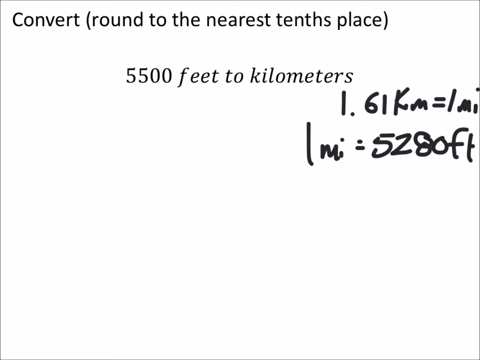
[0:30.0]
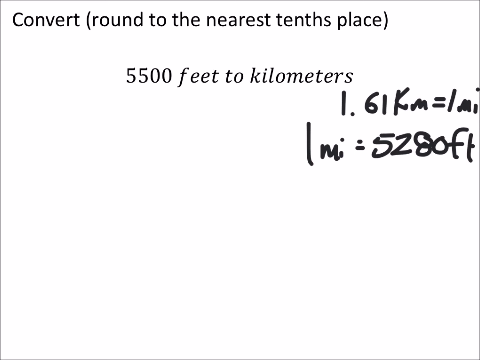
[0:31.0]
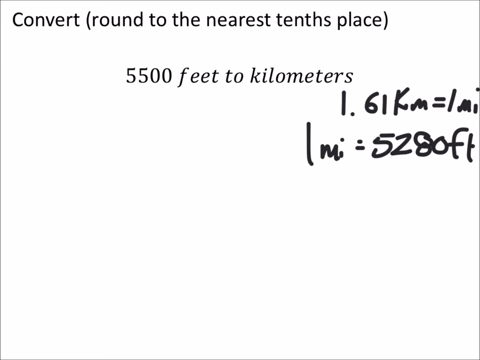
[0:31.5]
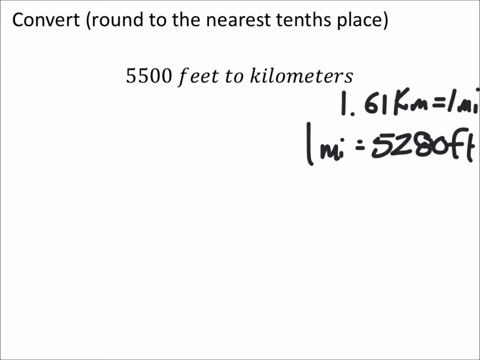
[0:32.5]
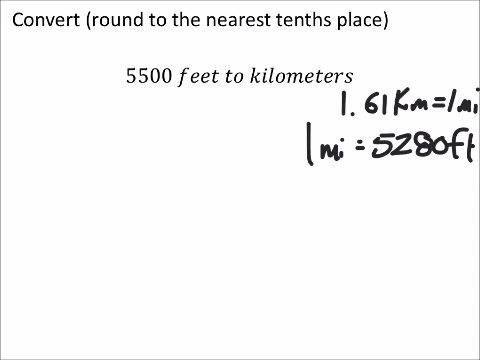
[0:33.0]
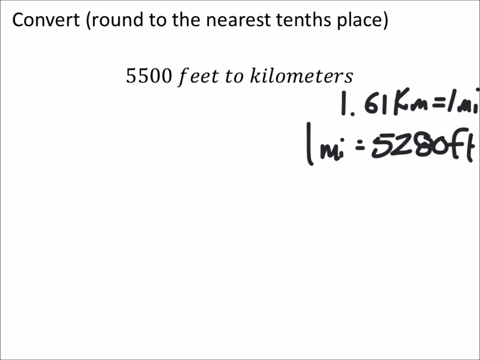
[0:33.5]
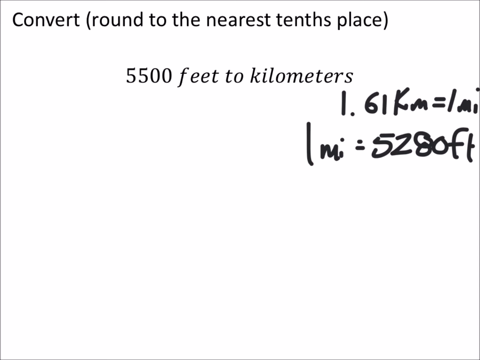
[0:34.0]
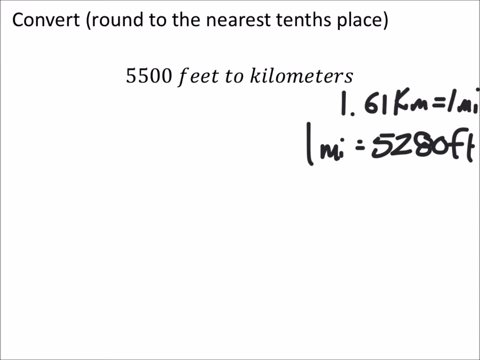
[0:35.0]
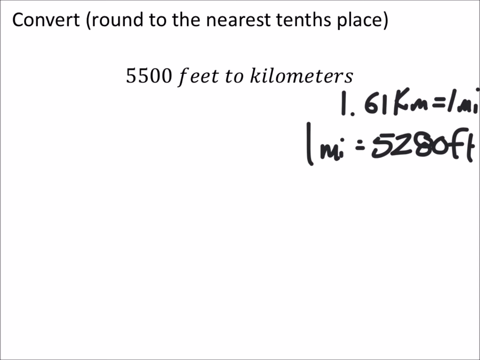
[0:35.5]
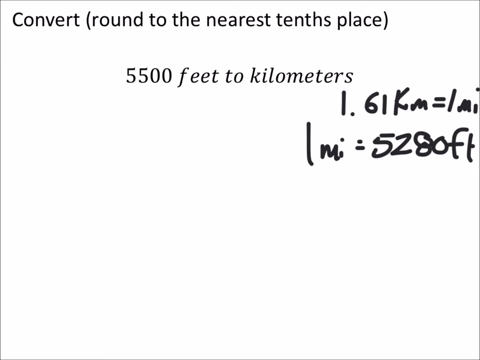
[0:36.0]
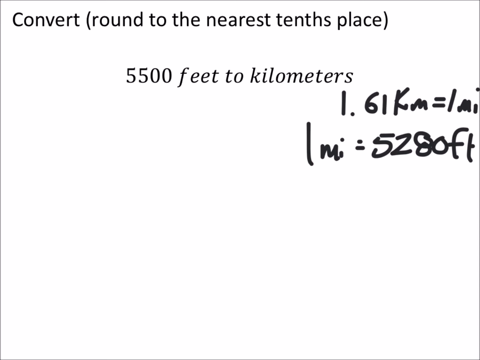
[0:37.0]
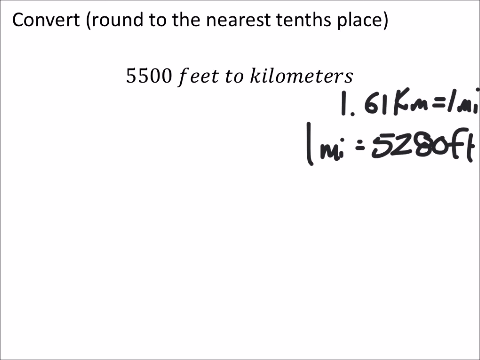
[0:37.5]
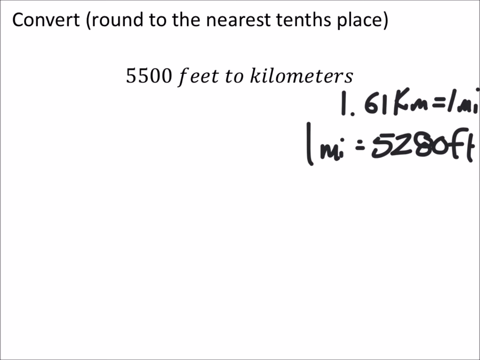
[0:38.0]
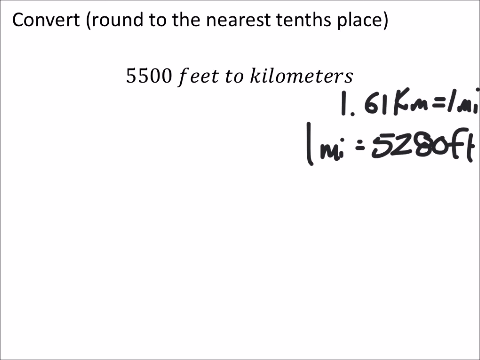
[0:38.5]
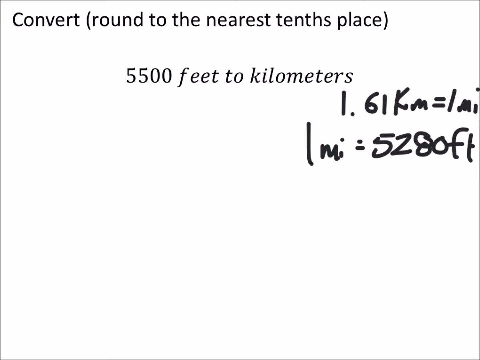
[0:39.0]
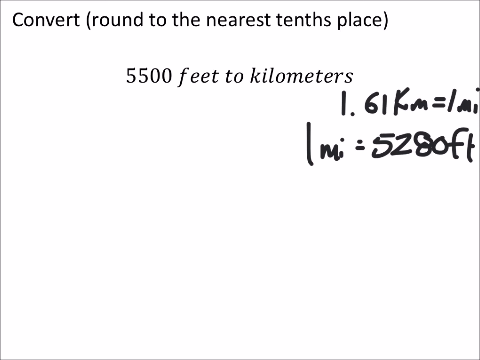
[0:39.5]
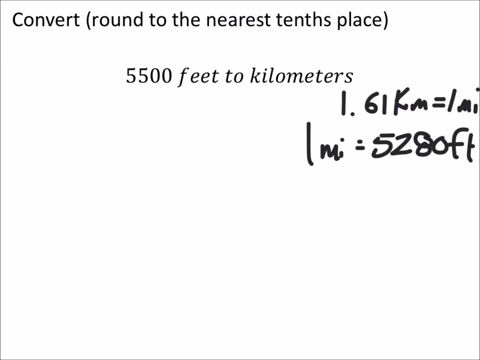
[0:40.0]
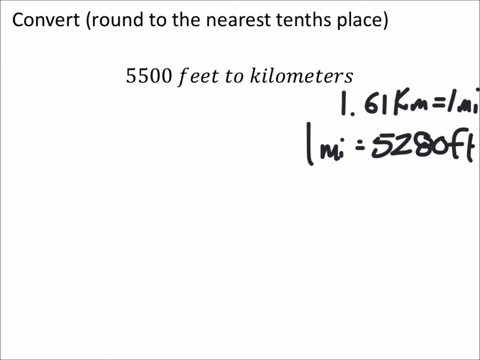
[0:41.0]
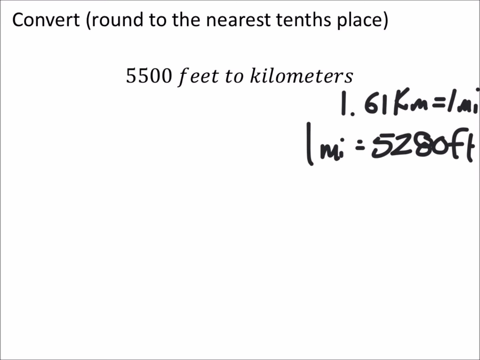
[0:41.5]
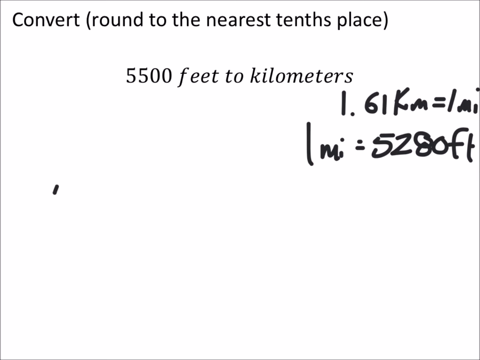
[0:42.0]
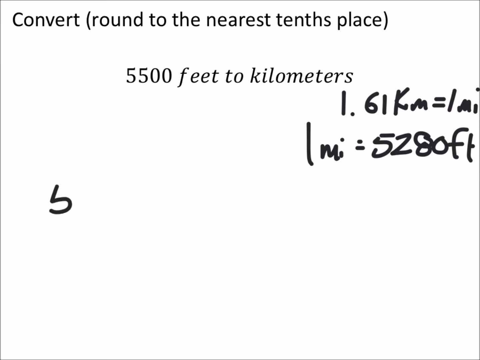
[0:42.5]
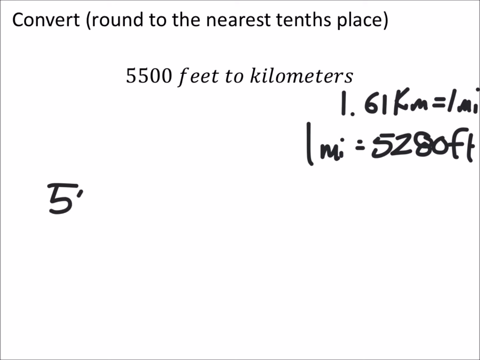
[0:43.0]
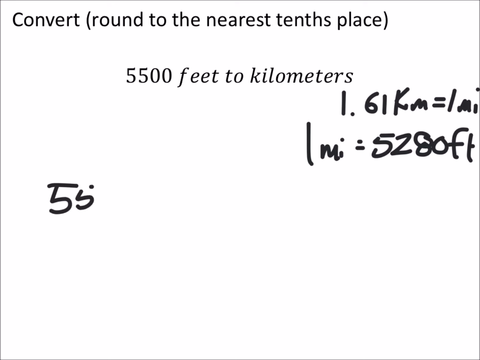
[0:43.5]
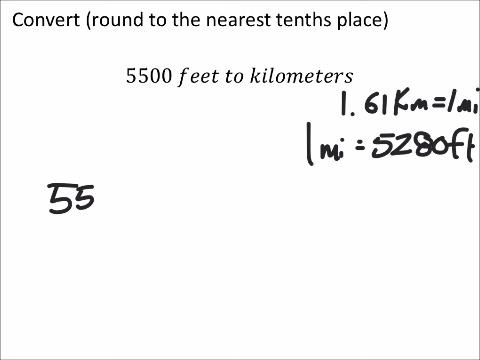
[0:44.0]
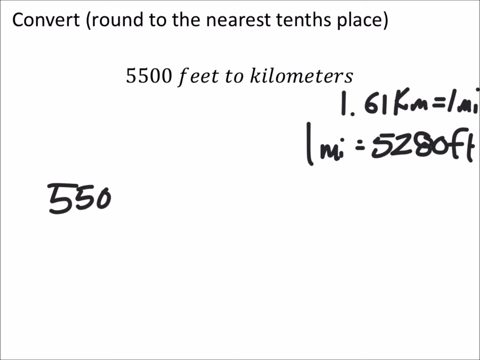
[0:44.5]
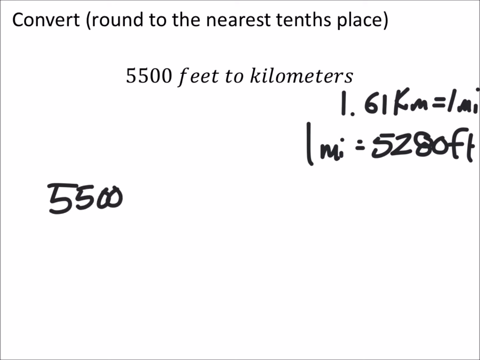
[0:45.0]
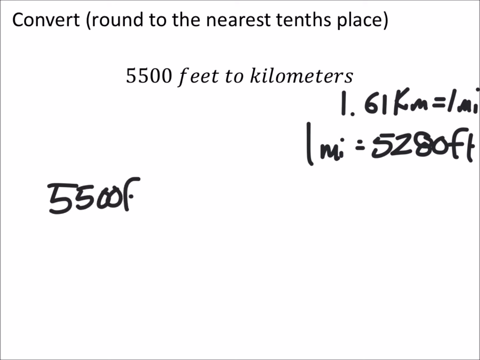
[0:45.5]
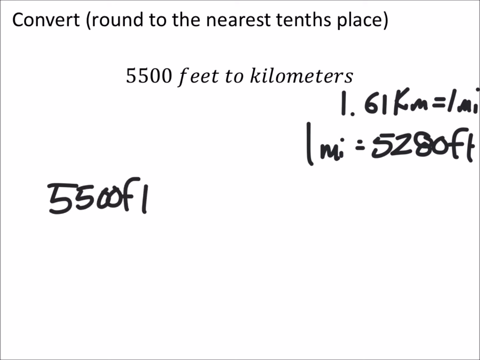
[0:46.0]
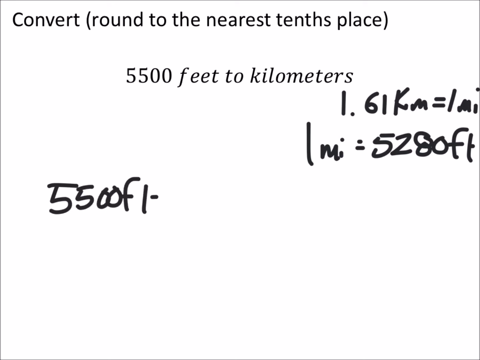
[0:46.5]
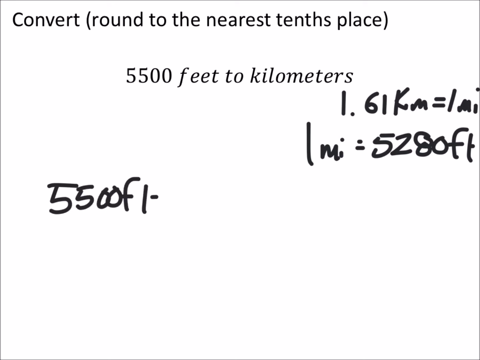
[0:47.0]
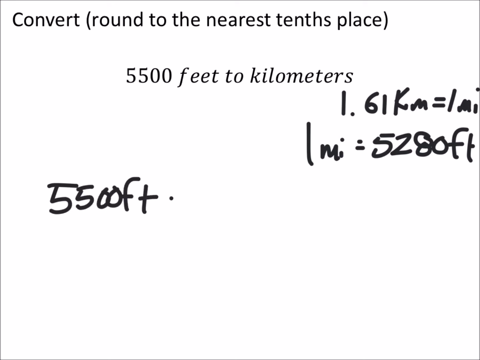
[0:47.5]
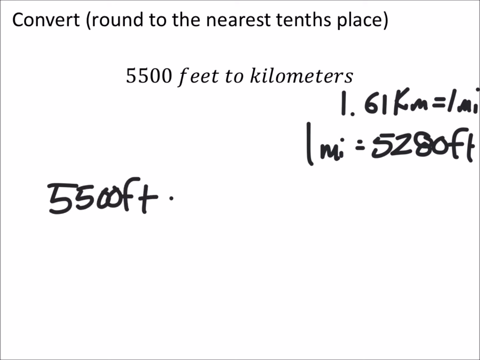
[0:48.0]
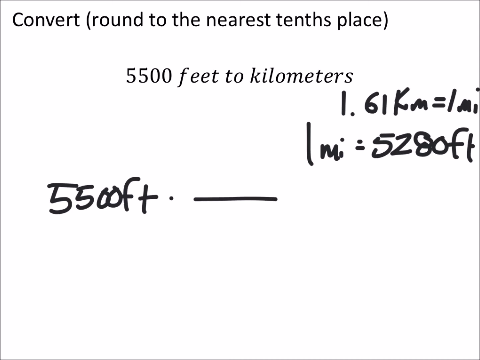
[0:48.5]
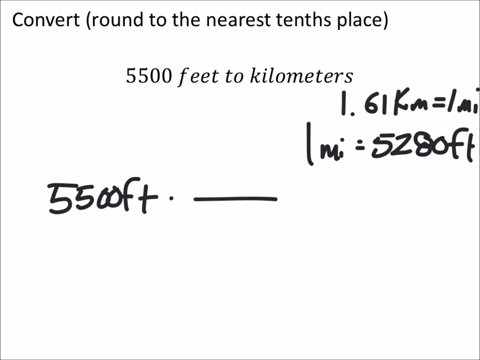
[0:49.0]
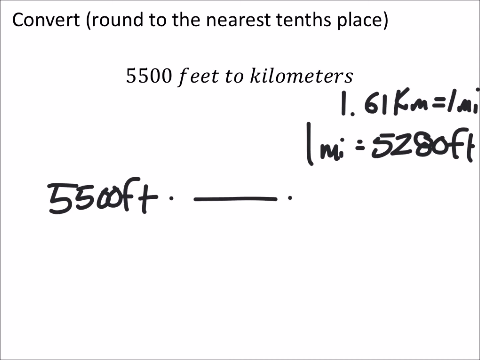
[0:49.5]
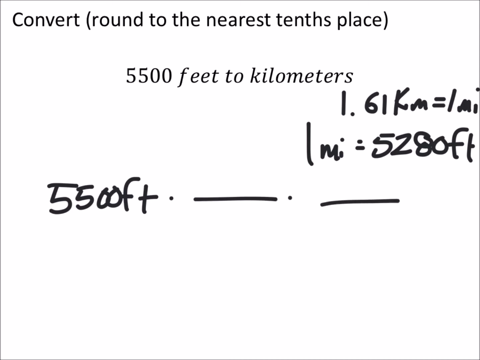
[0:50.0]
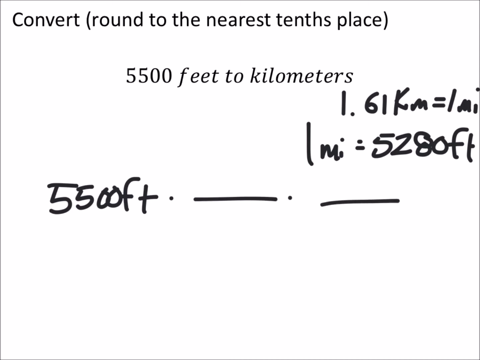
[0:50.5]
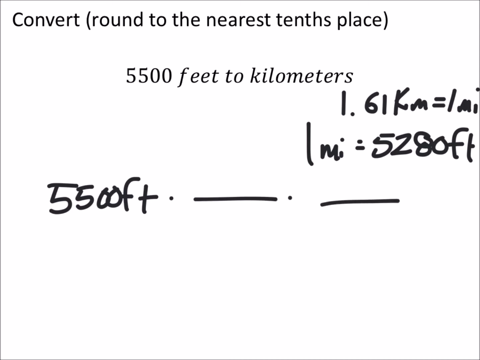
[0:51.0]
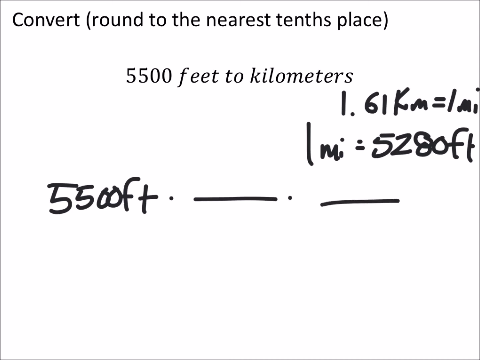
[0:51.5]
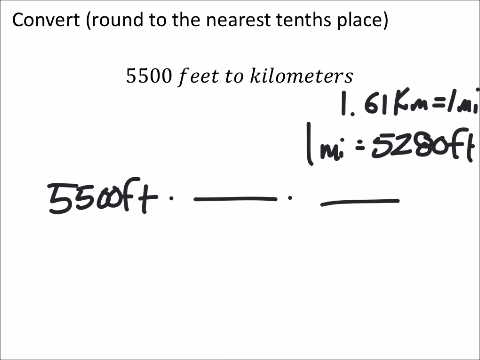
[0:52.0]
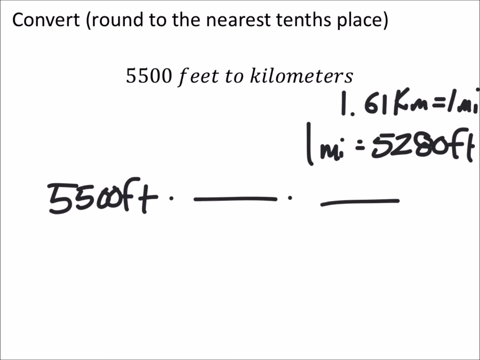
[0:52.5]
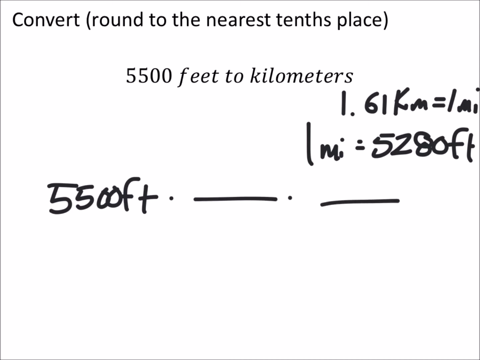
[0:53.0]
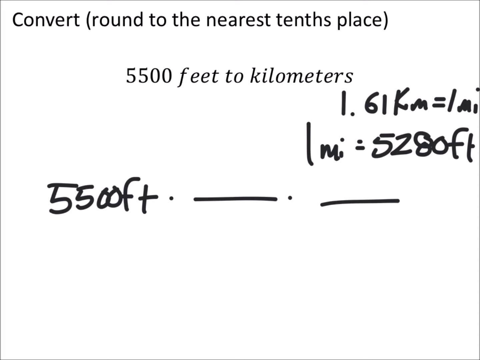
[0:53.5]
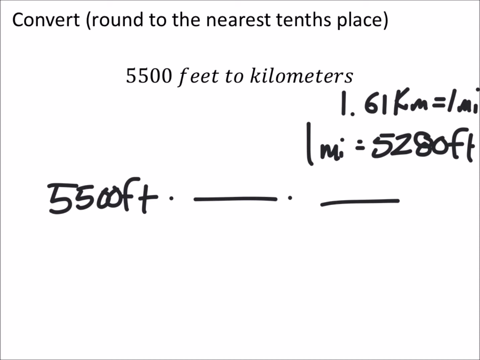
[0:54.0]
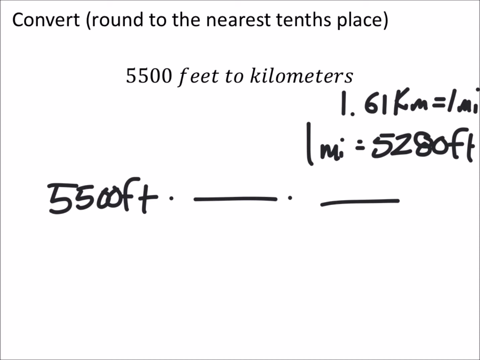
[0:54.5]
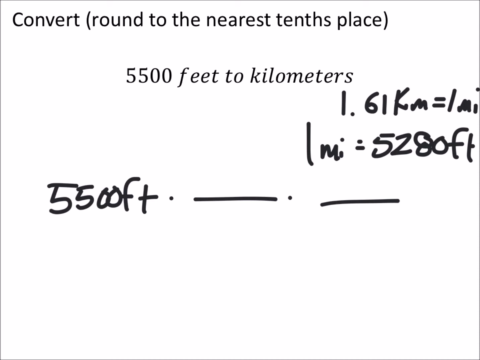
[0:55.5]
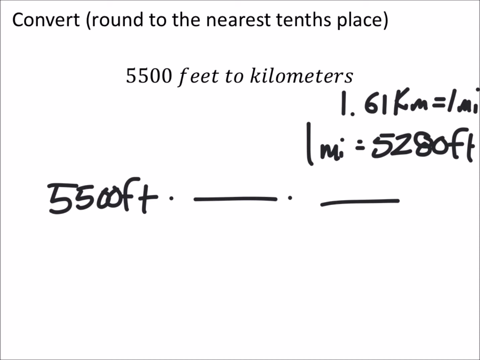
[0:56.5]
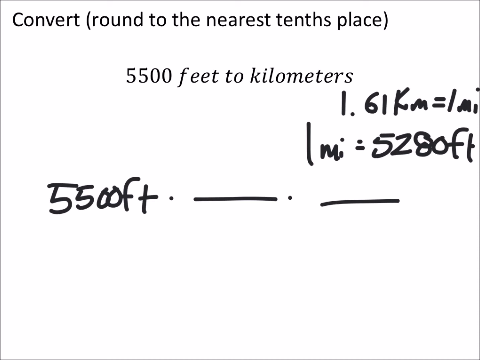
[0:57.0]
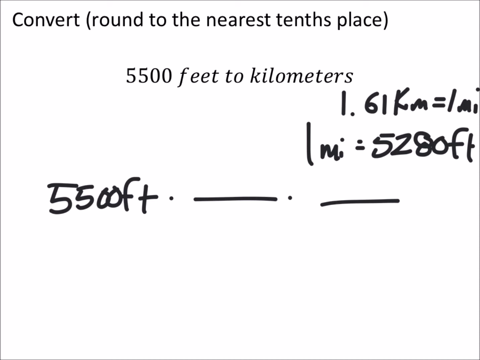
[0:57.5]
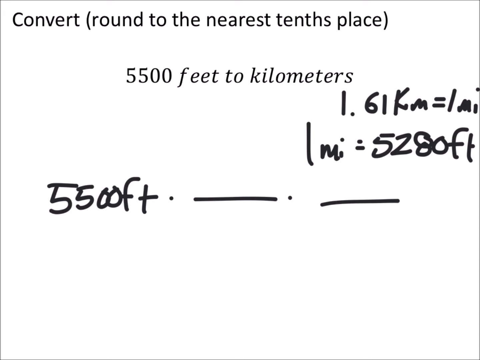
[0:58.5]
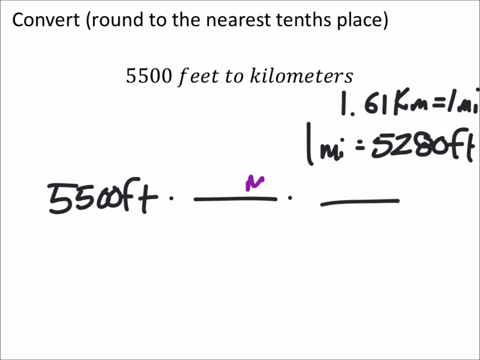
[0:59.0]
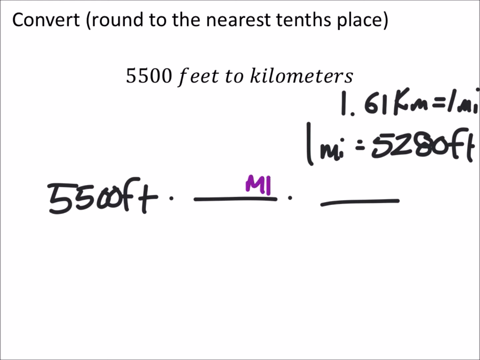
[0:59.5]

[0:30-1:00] The problem asks to convert 5,500 feet to kilometers, rounding to the nearest tenth. The equation states that 1.61 kilometers is 1 millimeter, with 1 millimeter divided by 5,280 feet. A value of 550 feet appears, along with dots and a sign whose meaning is unclear.